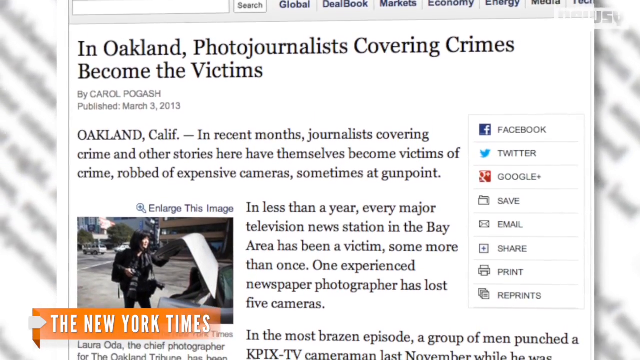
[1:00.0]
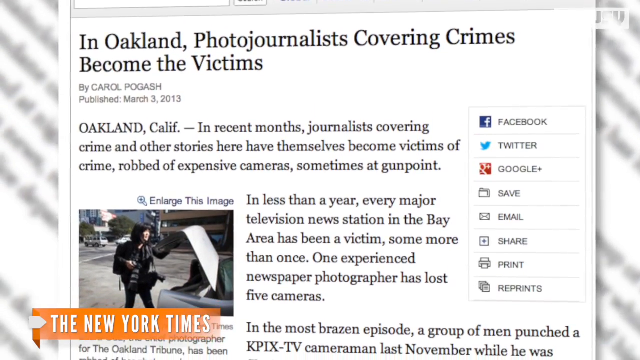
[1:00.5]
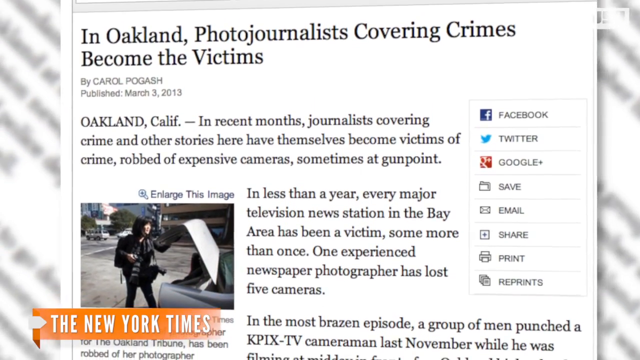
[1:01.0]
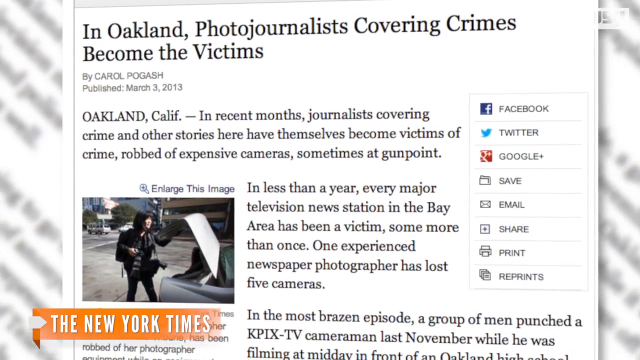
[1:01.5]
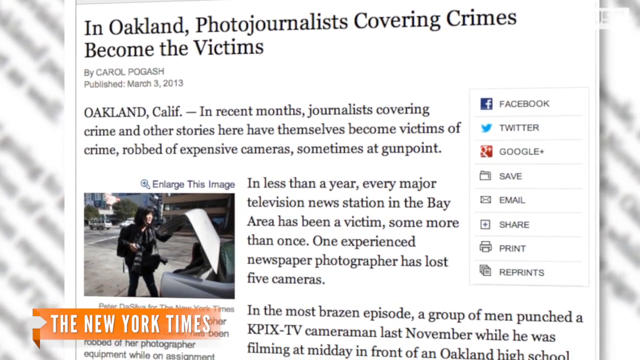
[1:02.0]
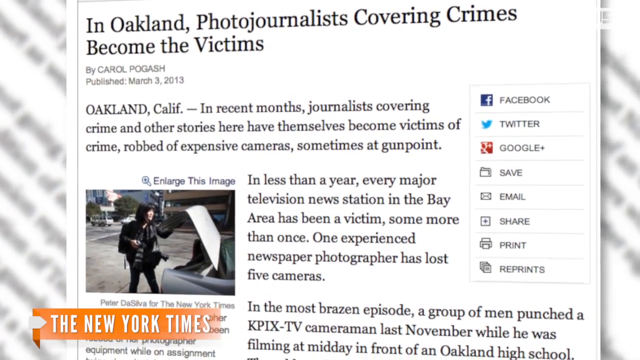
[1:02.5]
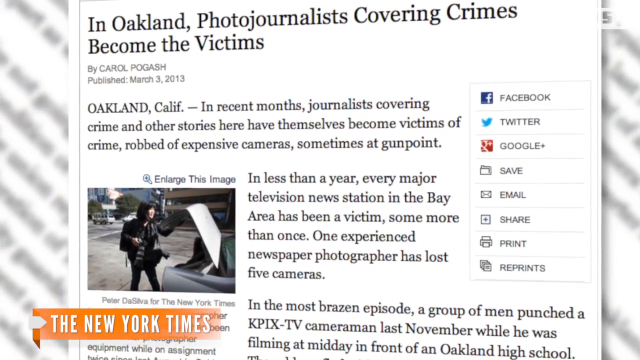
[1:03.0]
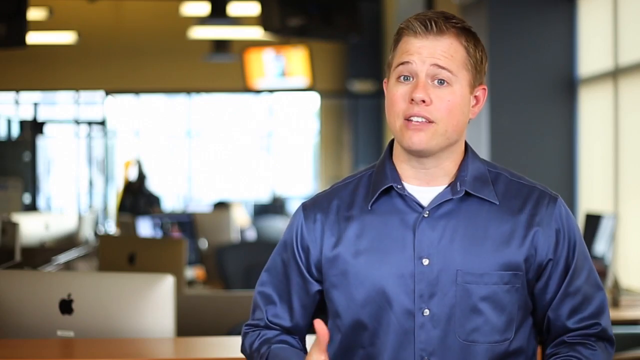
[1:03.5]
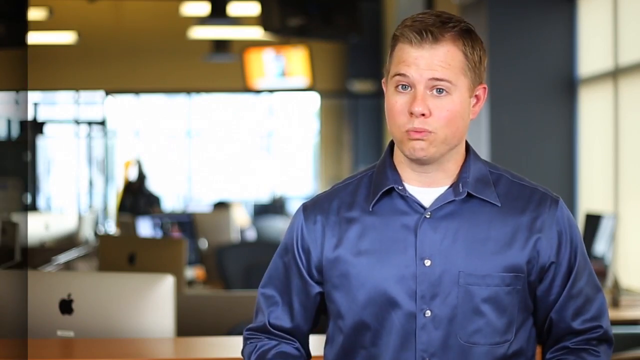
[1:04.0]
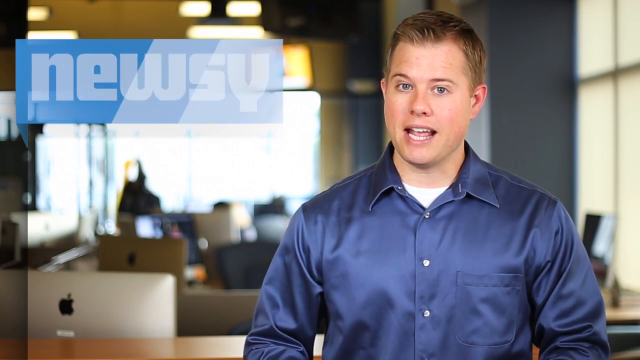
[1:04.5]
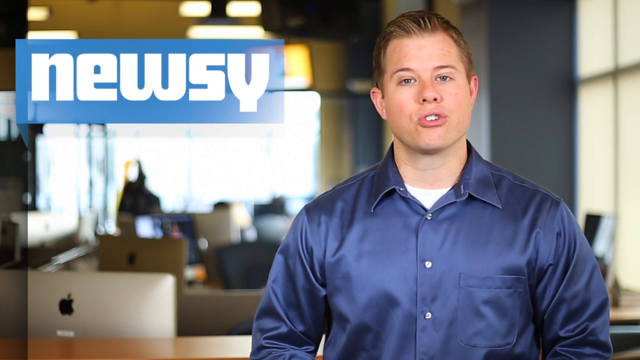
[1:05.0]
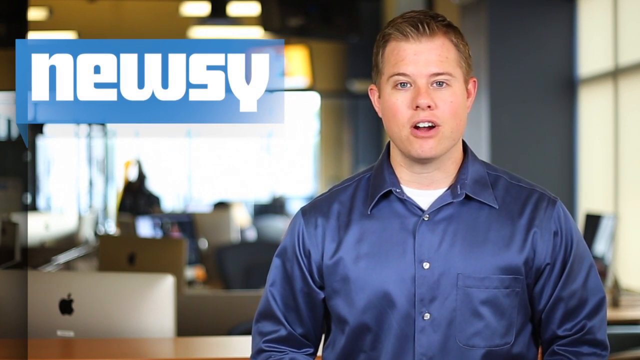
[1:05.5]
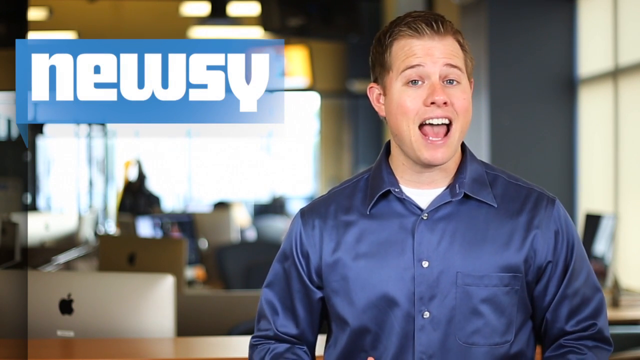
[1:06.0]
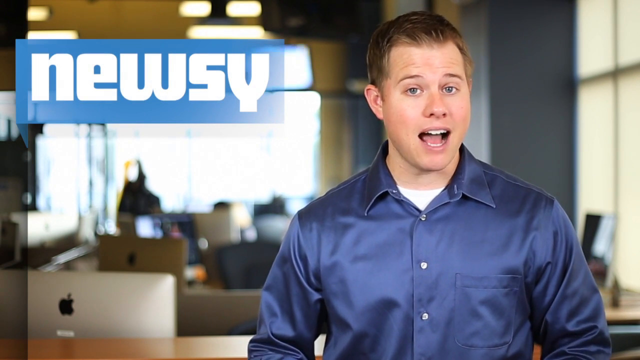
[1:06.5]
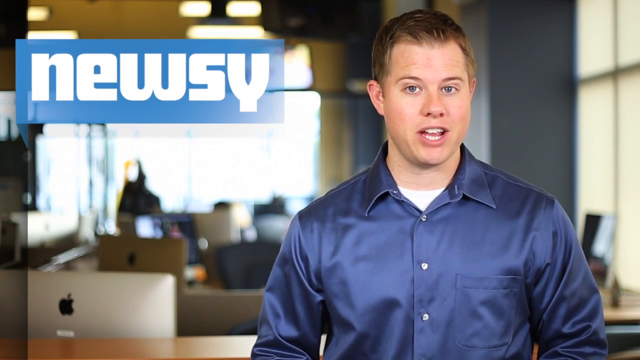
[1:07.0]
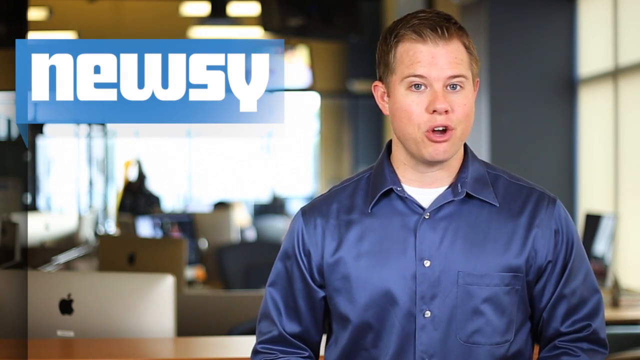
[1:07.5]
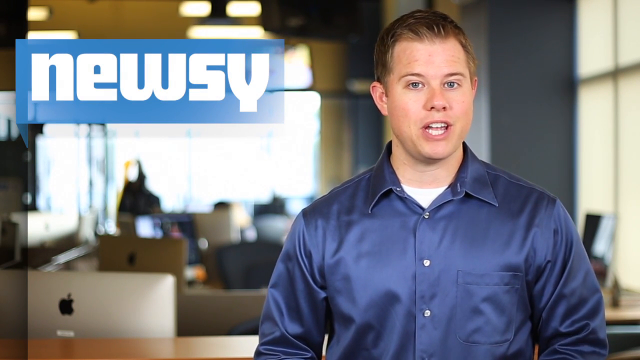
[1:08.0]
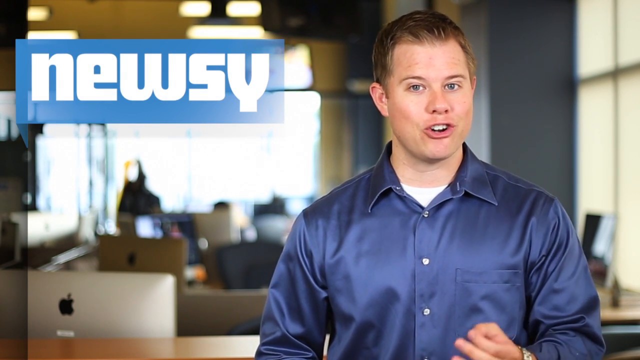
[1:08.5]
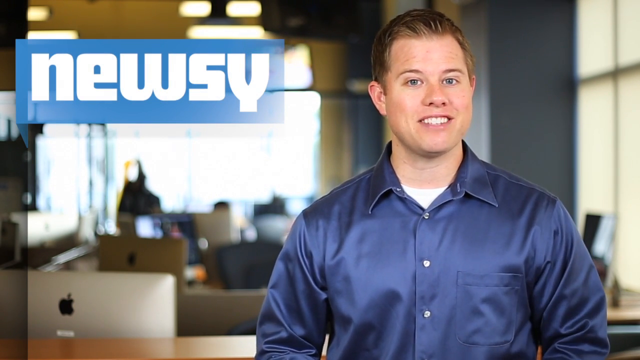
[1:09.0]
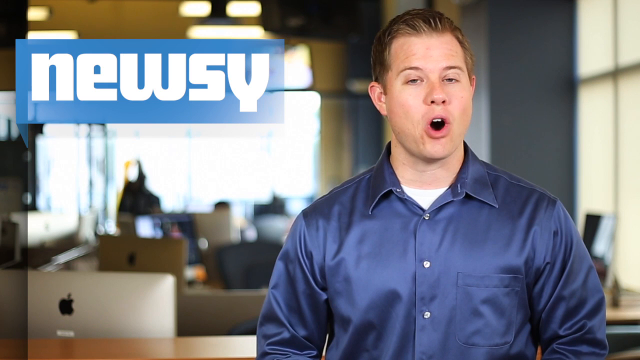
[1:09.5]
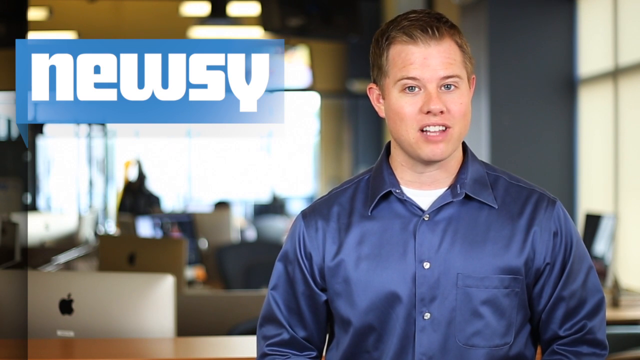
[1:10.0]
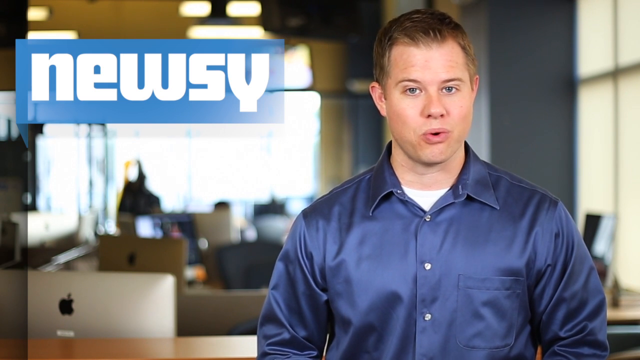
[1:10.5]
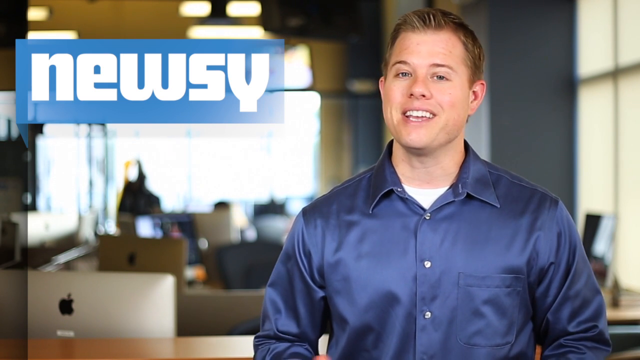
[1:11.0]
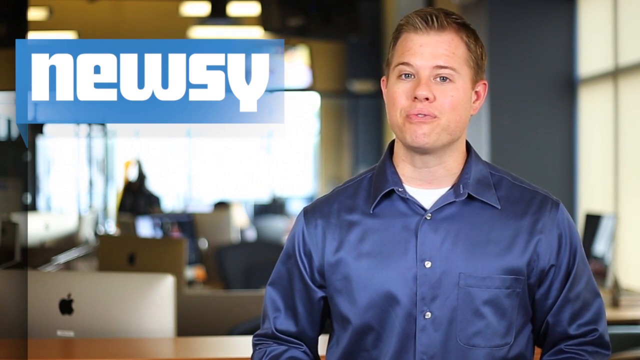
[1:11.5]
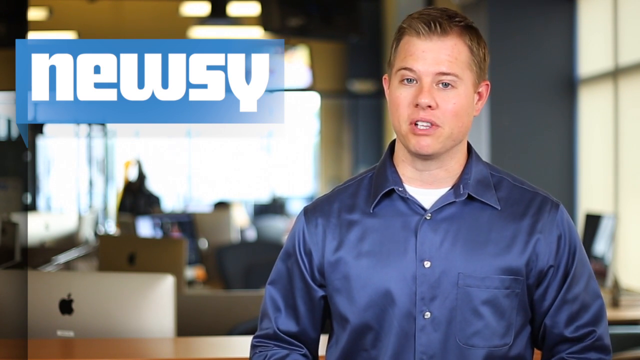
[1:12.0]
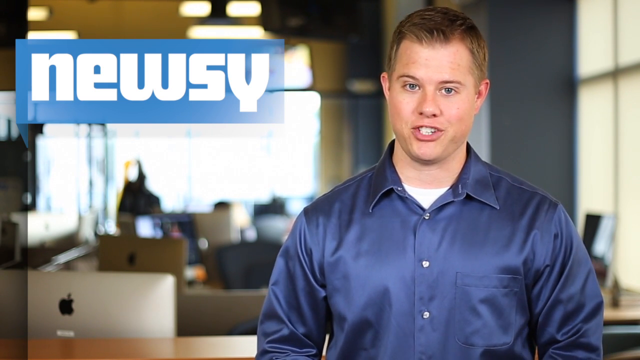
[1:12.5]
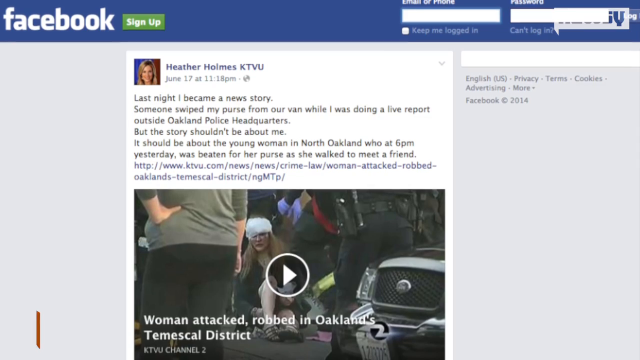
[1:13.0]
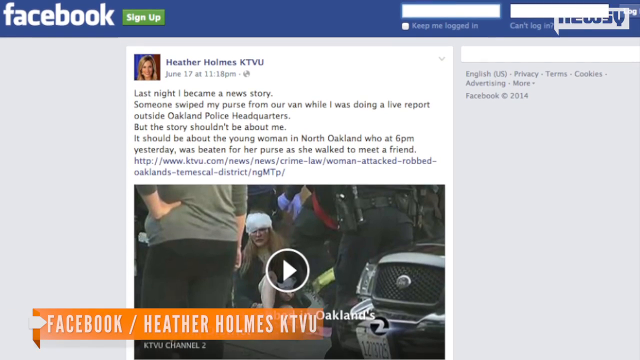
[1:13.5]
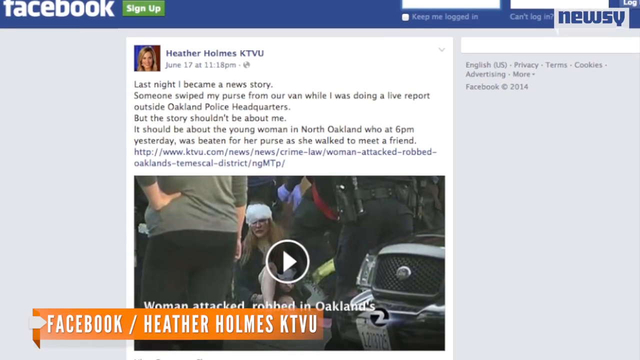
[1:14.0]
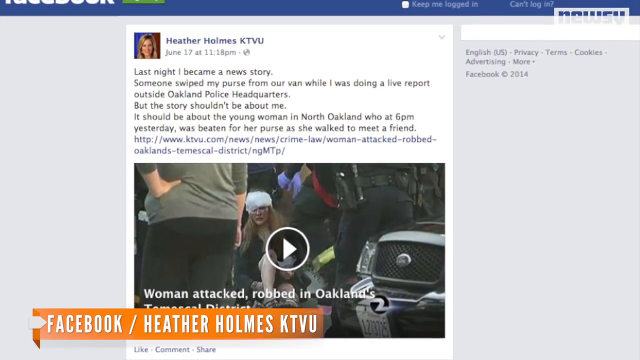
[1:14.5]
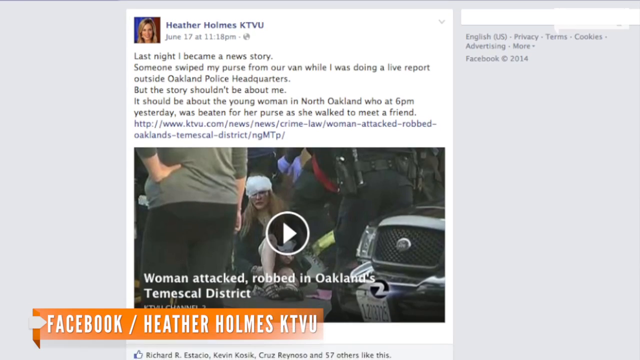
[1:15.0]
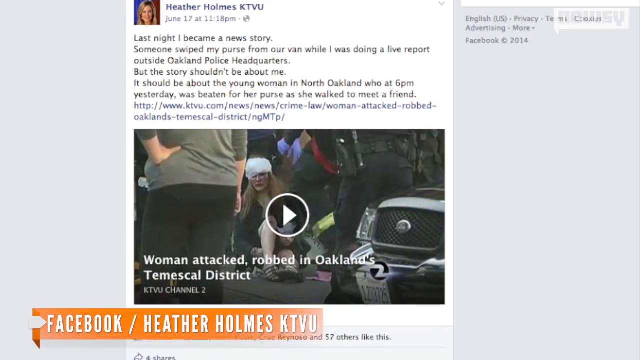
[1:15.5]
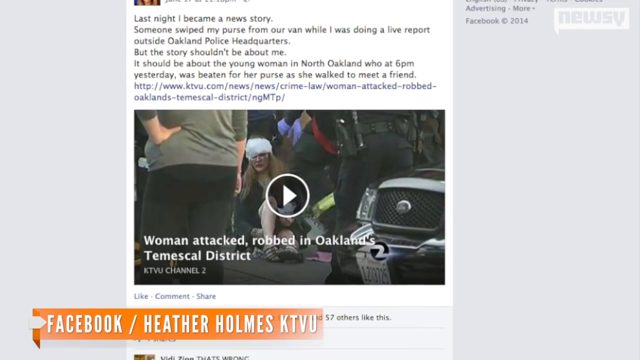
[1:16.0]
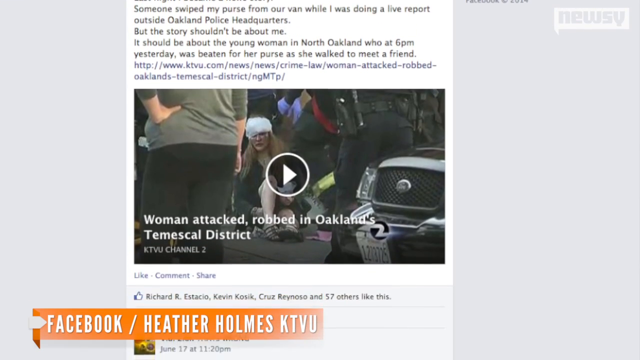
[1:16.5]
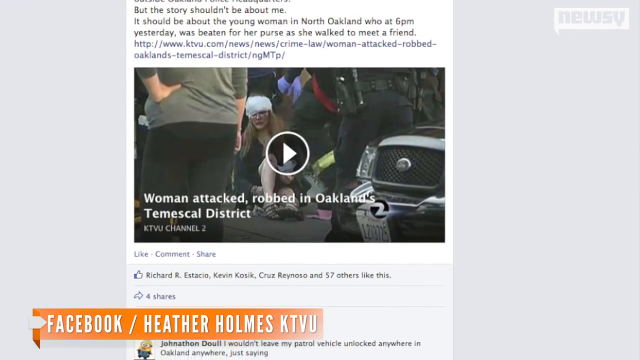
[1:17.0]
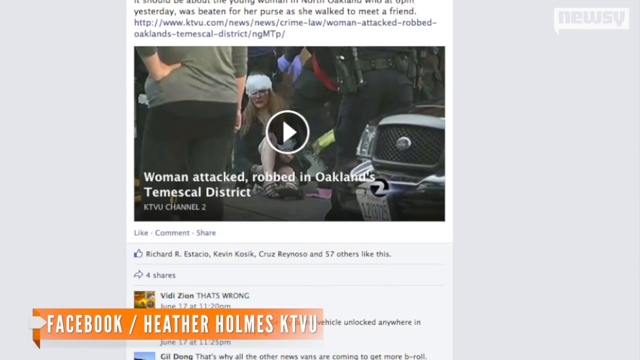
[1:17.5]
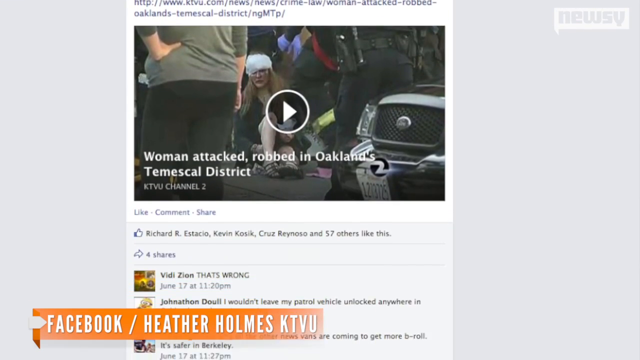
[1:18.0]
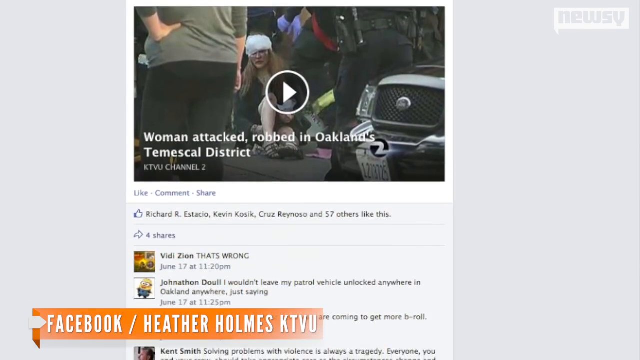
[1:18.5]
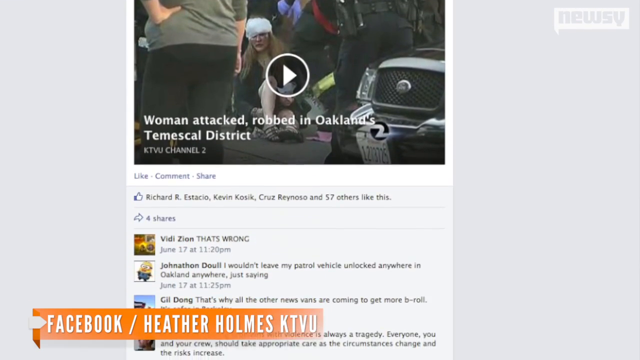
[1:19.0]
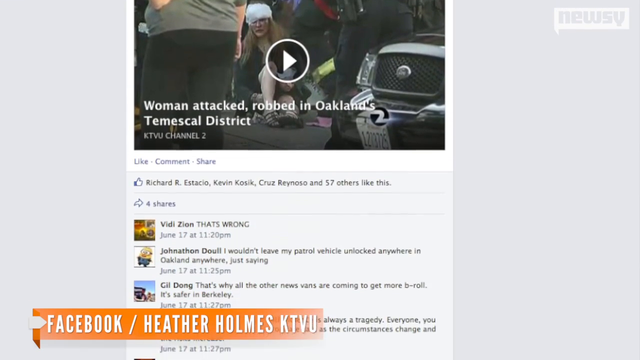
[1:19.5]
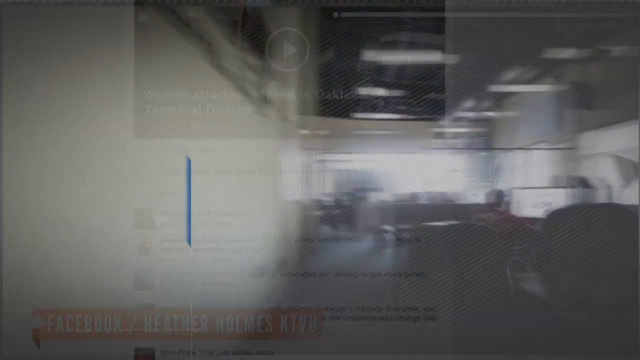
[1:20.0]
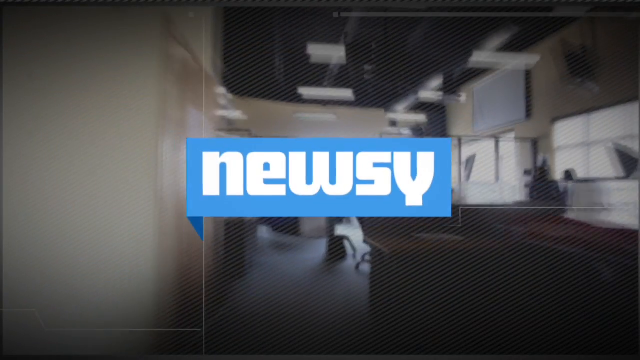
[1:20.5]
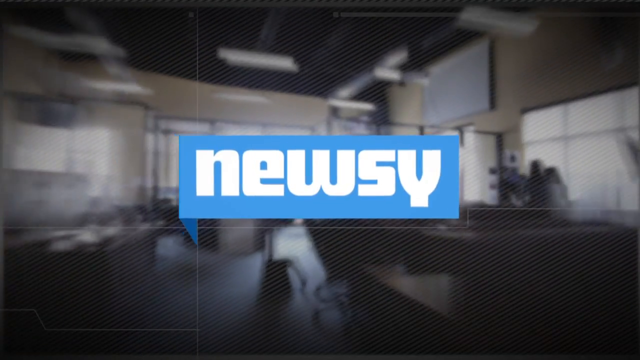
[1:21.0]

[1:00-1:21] The New York Times article continues on screen: "Oakland, Calif., in recent months, journalists covering crime and other stories here have themselves become victims of crime, robbed of expensive cameras". On the right side are options such as Facebook, Twitter, Google+, Save, Email, Share, Print and Reprint. The article goes on: "in less than a year, every major television news station in the Bay Area has been a victim, some more than once. One experienced newspaper photographer has lost five cameras." The video then cuts to the man from before, talking to the camera with the Newsy logo in the top left of the screen. Another site follows, about a woman attacked and robbed in Oakland's Temescal District, with an embedded video. Comments and reactions below include one saying "that's wrong" and another saying "I wouldn't leave my patrol vehicle unlocked anywhere"; everyone is shocked.